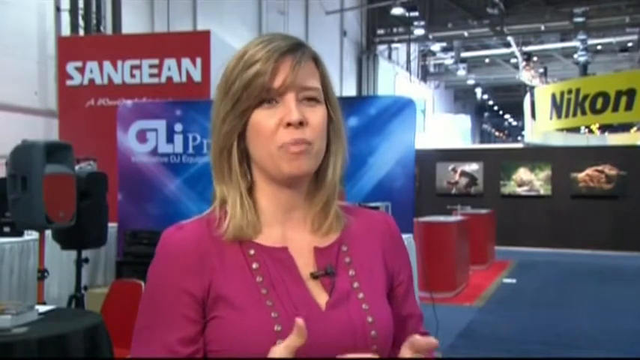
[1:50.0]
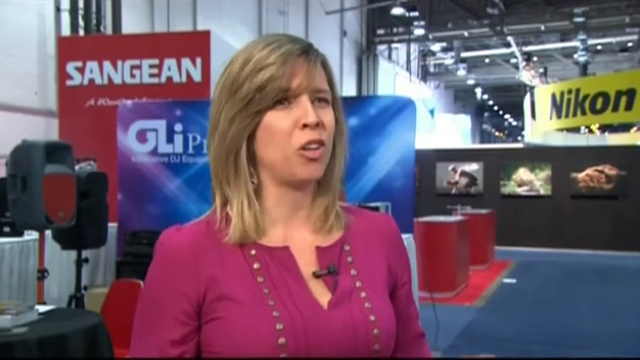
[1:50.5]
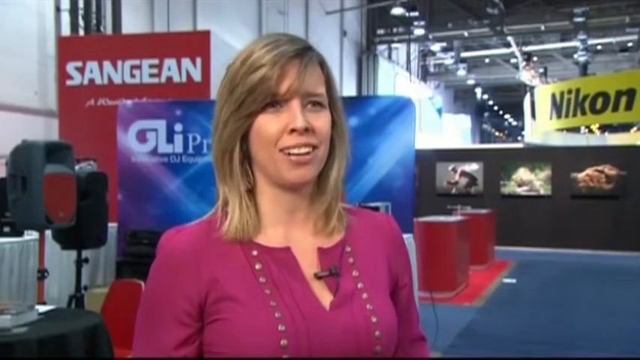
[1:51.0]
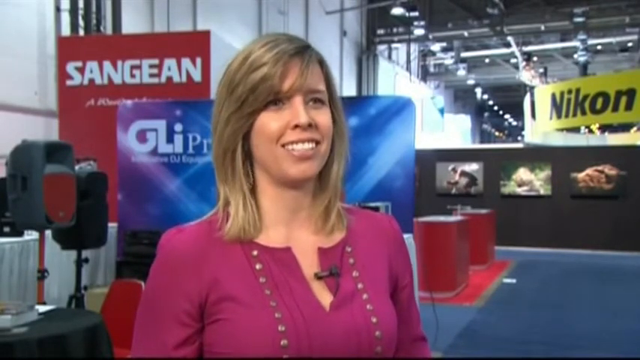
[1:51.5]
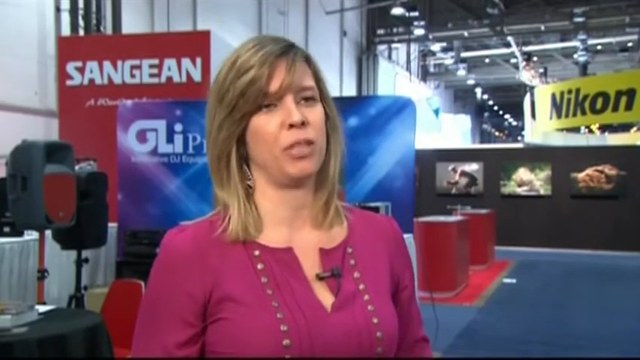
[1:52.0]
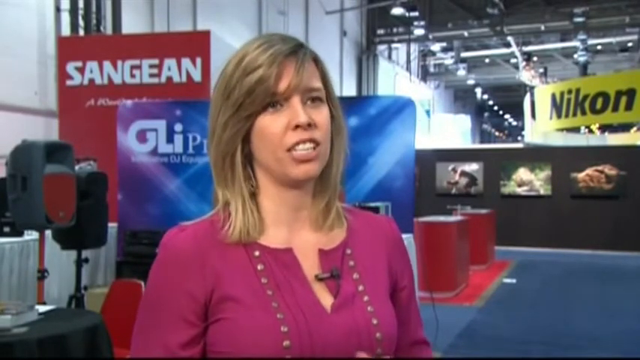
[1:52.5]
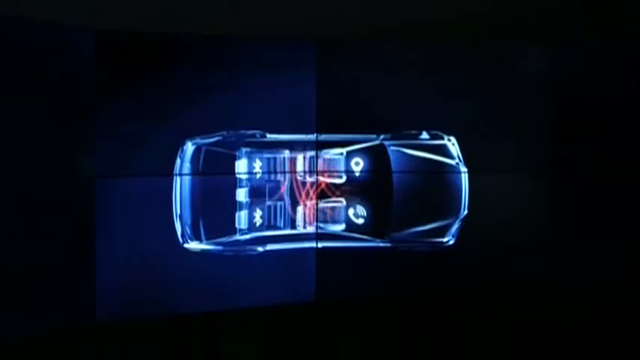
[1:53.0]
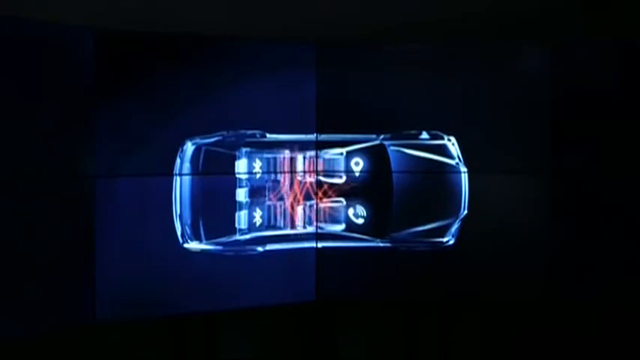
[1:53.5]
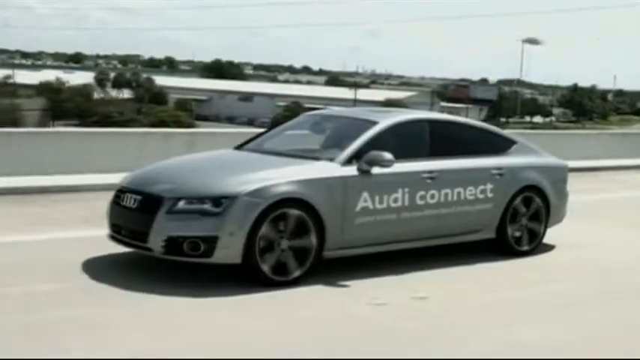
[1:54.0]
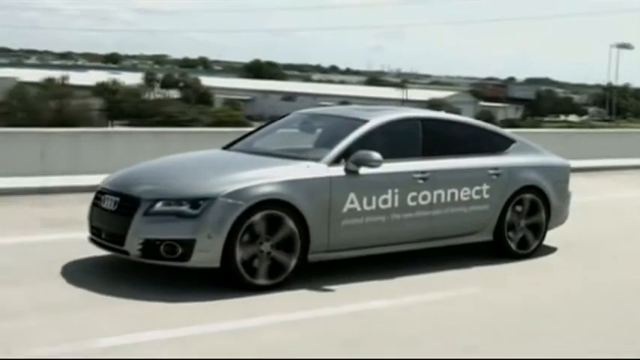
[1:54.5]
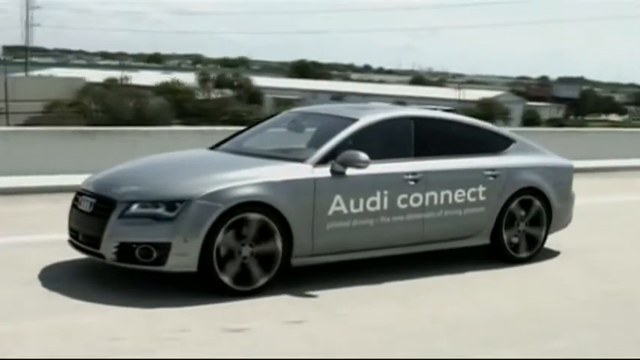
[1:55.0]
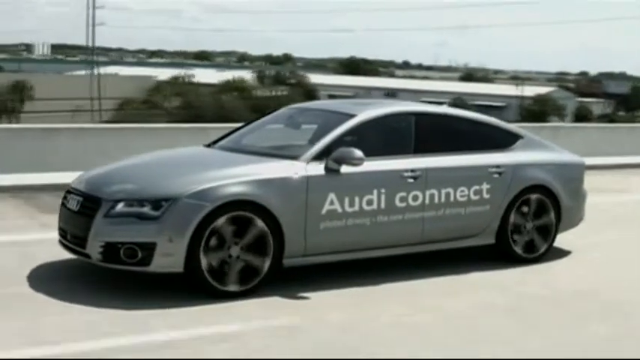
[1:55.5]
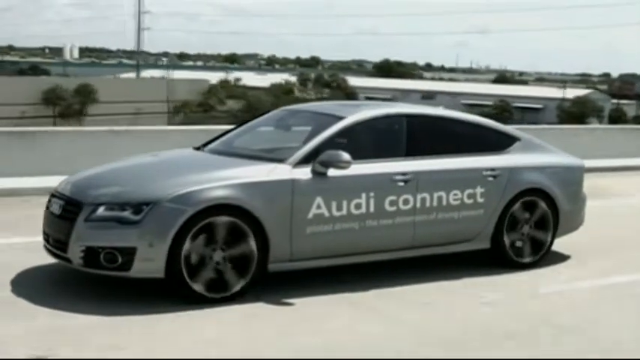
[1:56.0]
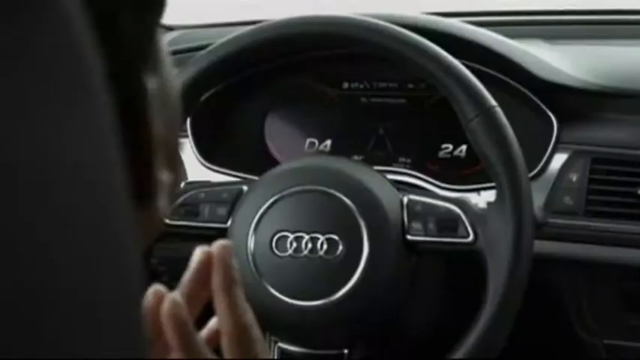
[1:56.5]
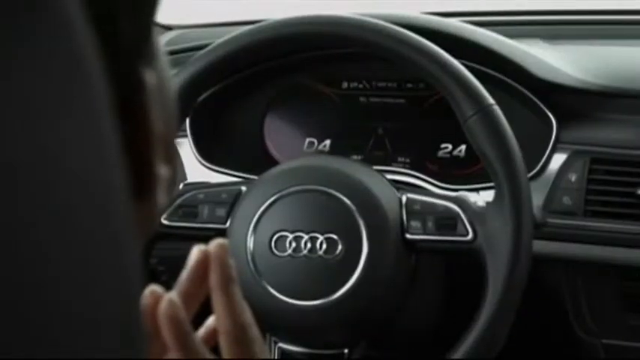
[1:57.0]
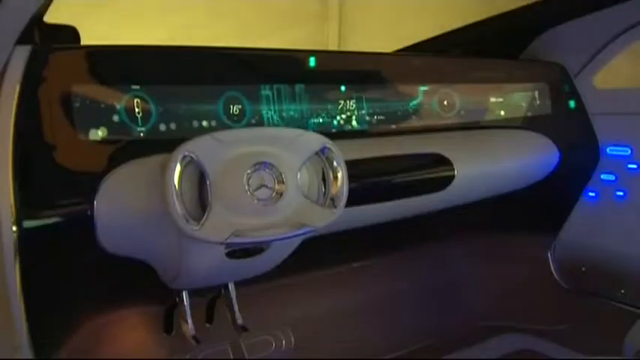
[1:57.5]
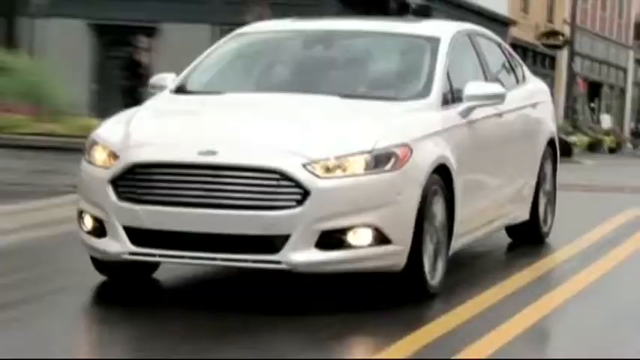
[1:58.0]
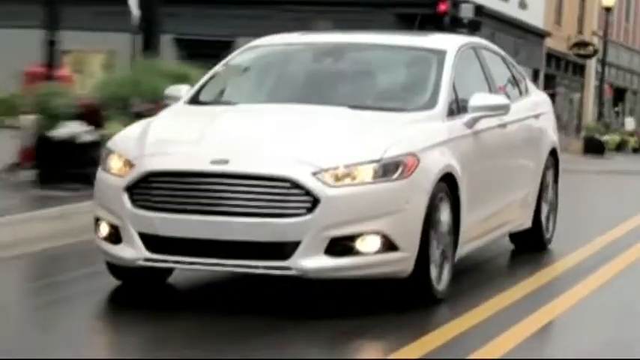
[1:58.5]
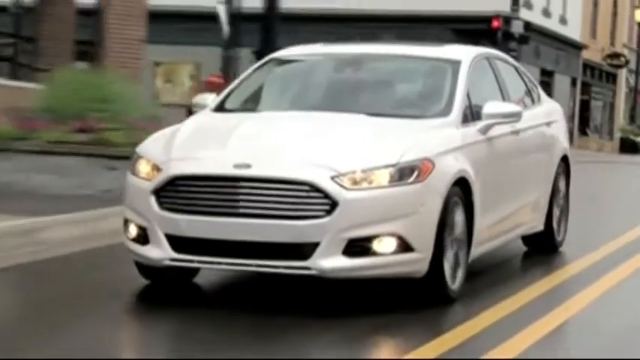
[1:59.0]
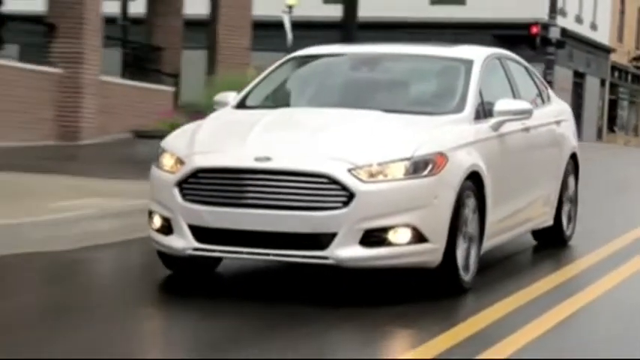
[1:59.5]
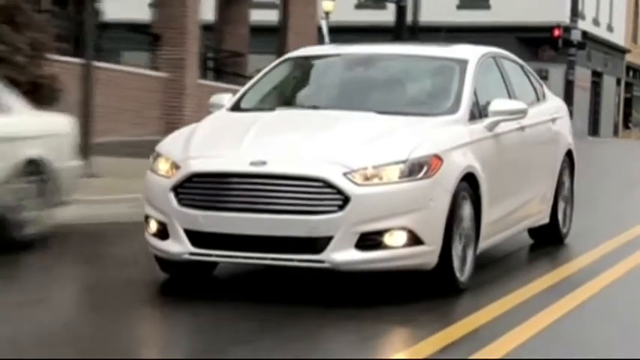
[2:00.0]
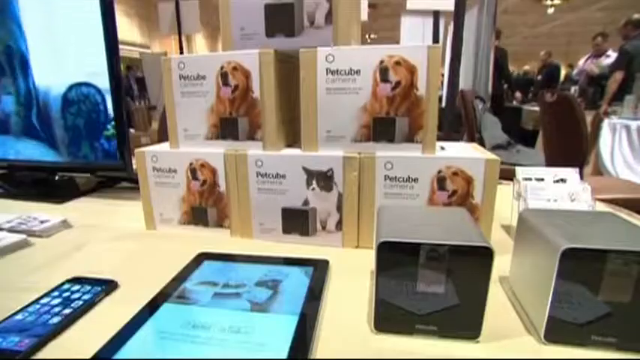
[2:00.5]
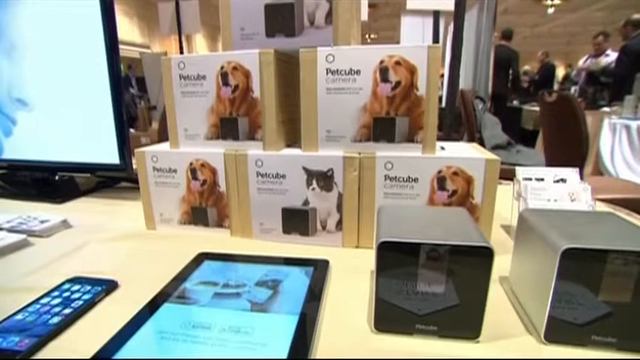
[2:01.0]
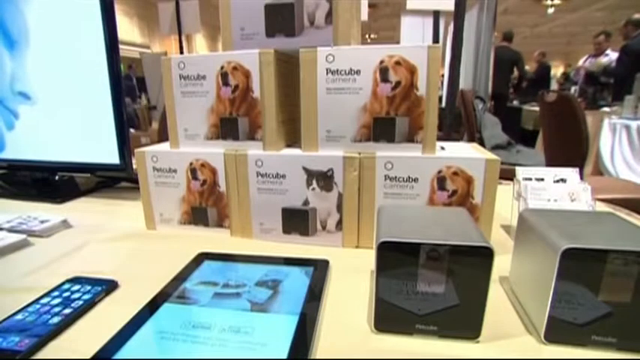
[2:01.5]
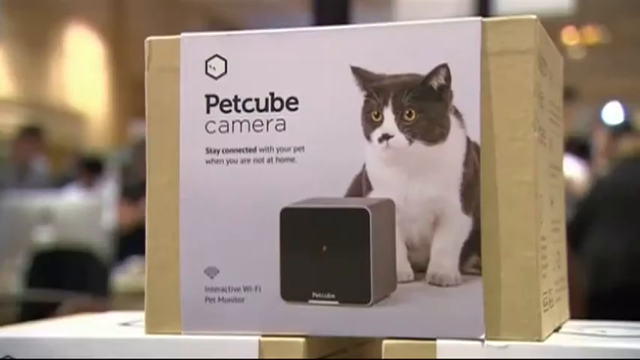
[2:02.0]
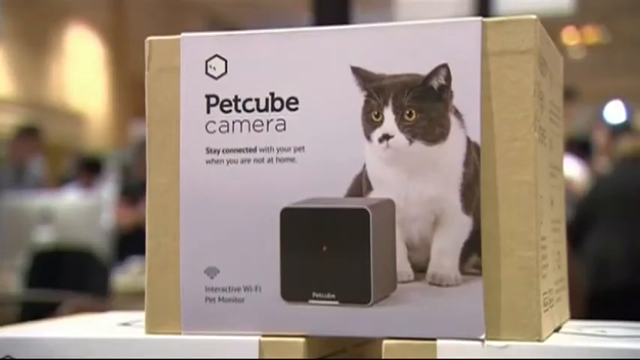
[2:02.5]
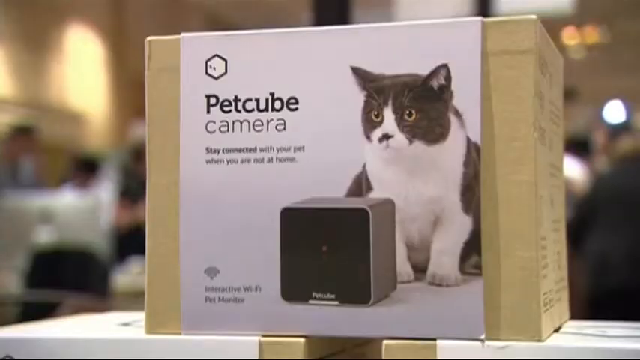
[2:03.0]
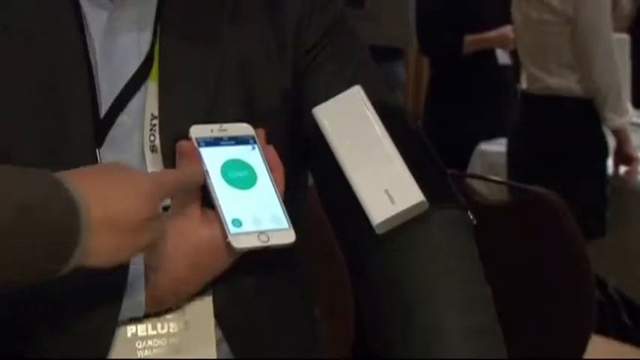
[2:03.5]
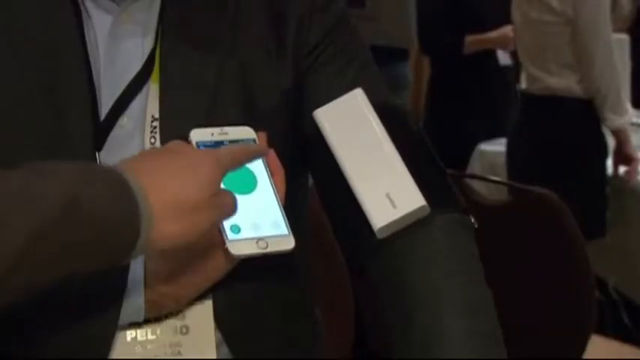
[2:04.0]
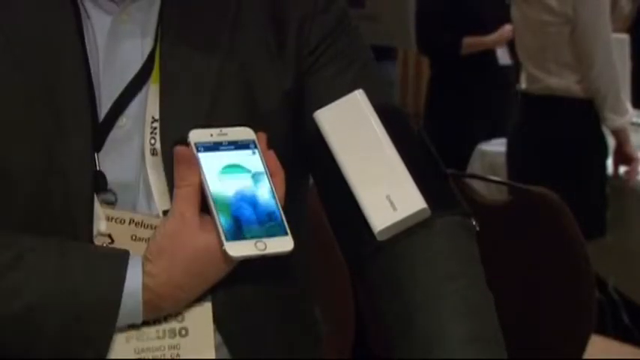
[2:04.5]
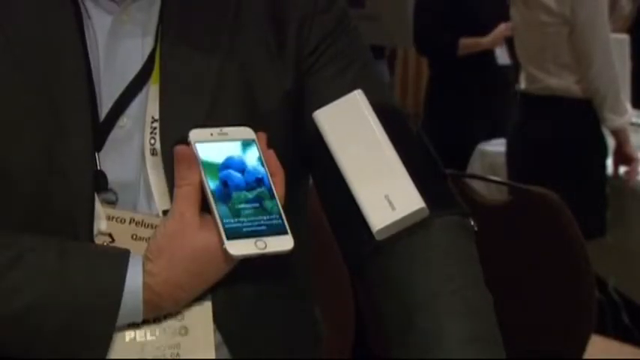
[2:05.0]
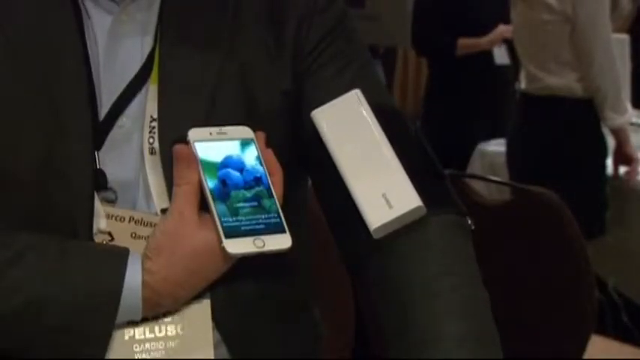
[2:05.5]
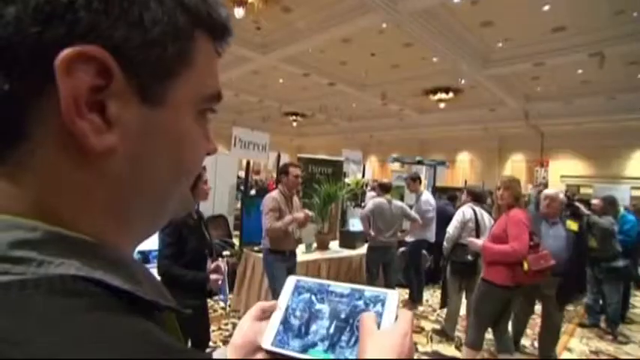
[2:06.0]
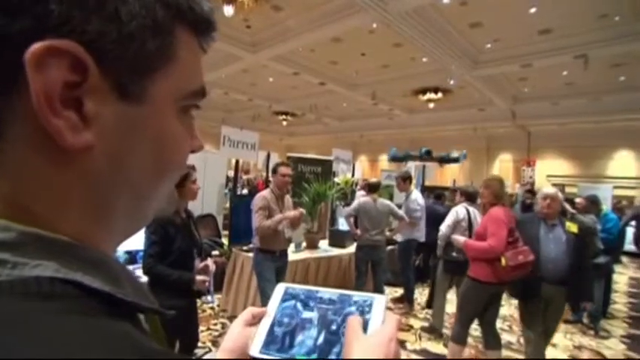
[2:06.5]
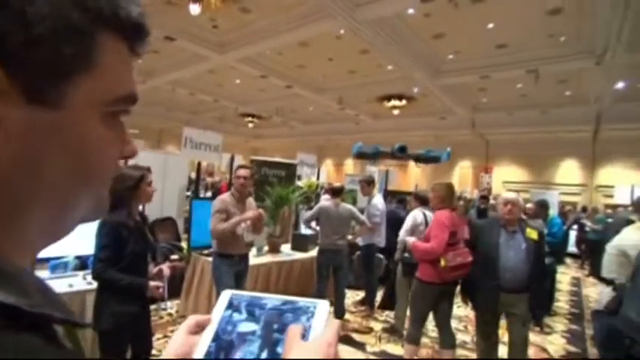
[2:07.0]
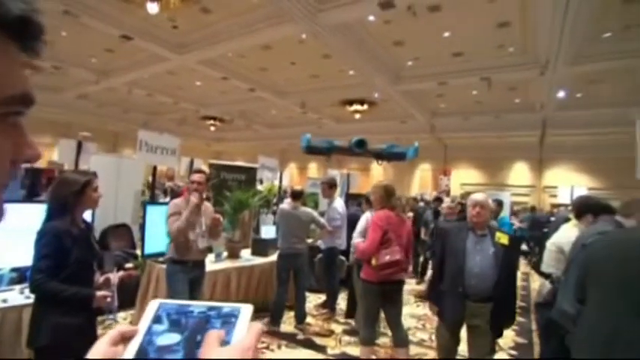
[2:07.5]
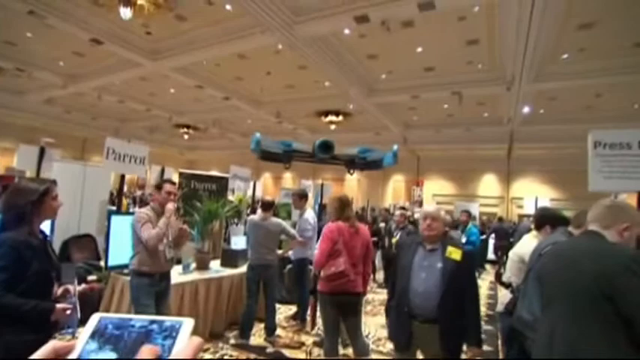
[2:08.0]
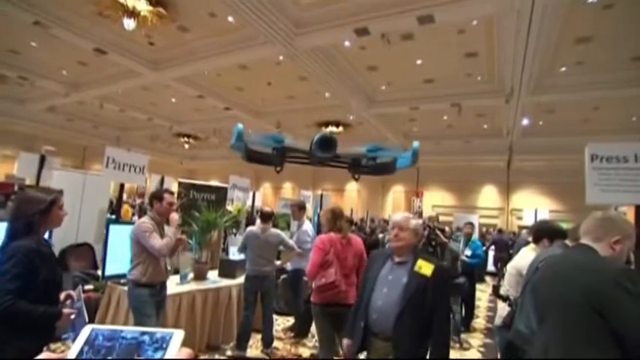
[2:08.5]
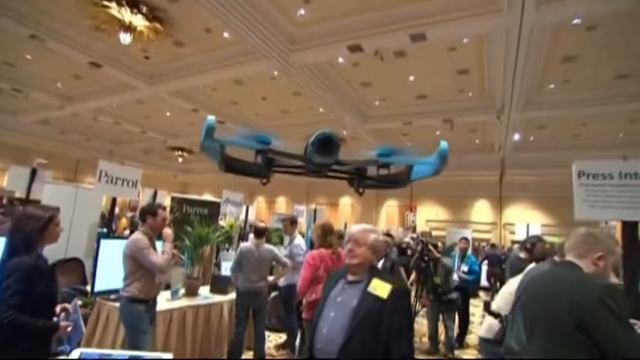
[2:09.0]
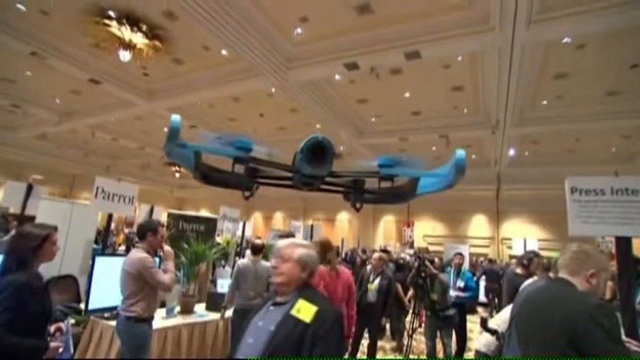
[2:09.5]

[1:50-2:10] Katie continues talking, shaking her head a little. A top-down view of the inside of a car then shows connections that look like Wi-Fi signals. The car is possibly facing right, with the driver's side at the top left and the passenger side at the bottom right. By the driver's seat is a location ping symbol, and at the passenger side a telephone call symbol, both seemingly sending waves out to the left. Two Bluetooth signs near the back seats appear to bounce signals back. A car, possibly the same one, then drives on a road from right to left, seemingly a highway. It is an Audi, and on its driver and passenger doors it says "Audi connect," with small text below that is too small to read. The inside of the Audi then shows some of its tech. A different car drives toward the camera. Lastly, a mix of pet-related items appears, followed by a drone flying toward the camera.